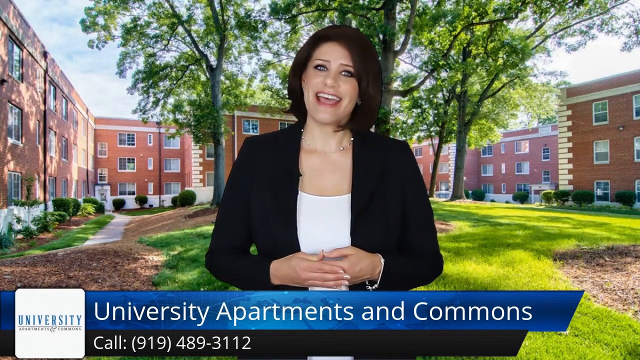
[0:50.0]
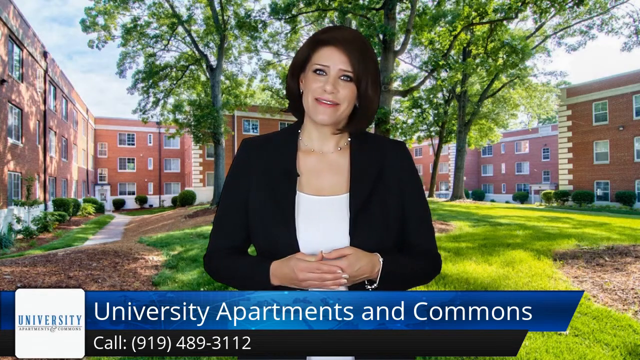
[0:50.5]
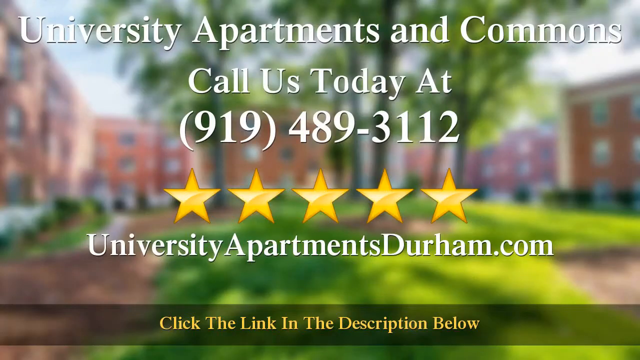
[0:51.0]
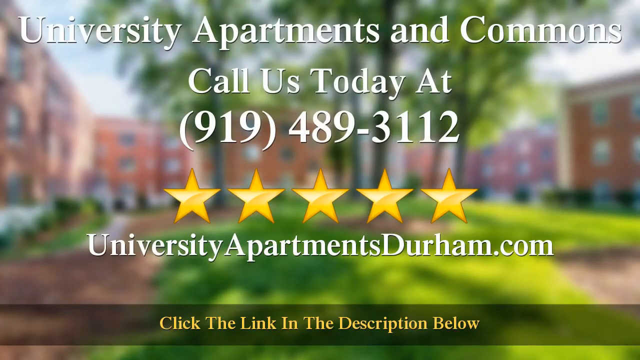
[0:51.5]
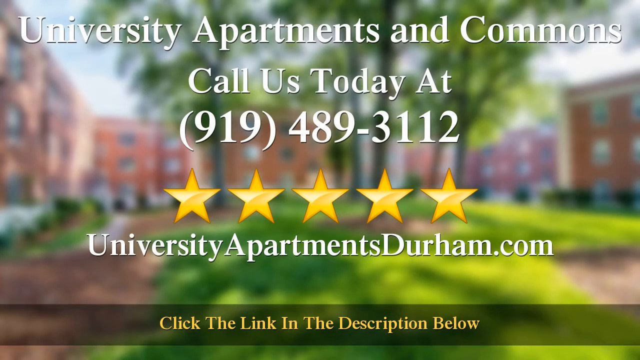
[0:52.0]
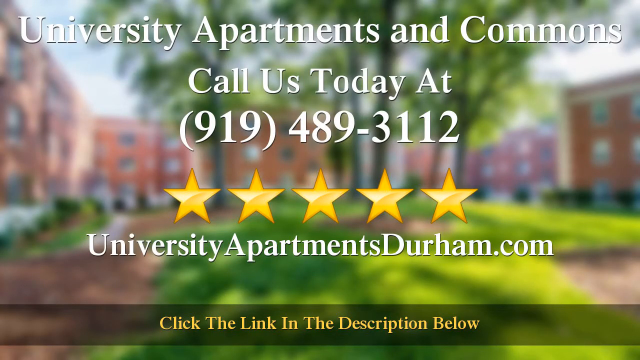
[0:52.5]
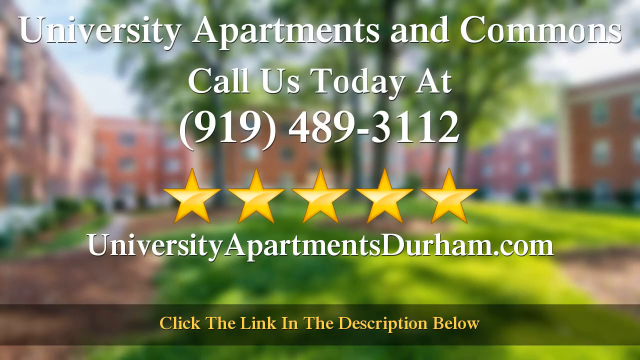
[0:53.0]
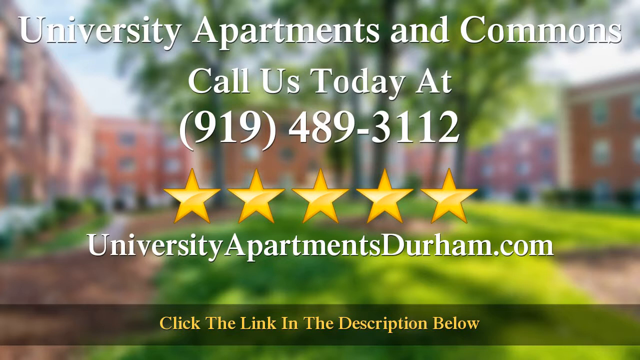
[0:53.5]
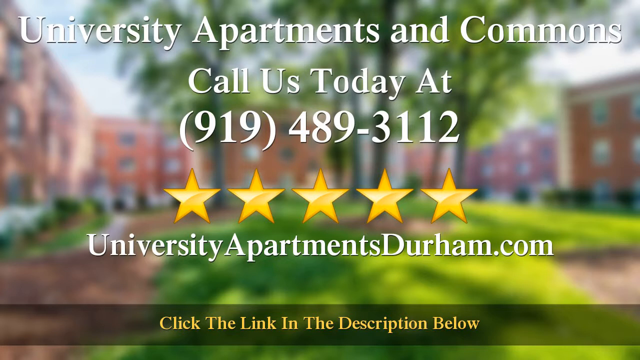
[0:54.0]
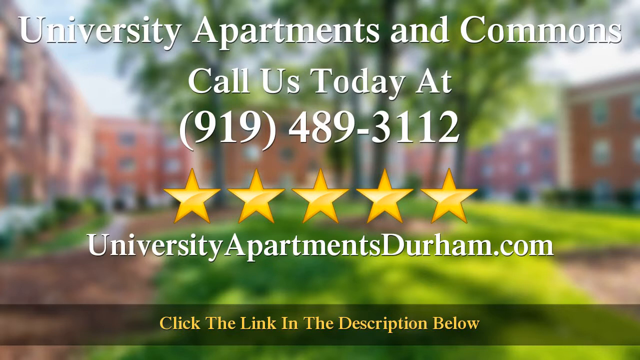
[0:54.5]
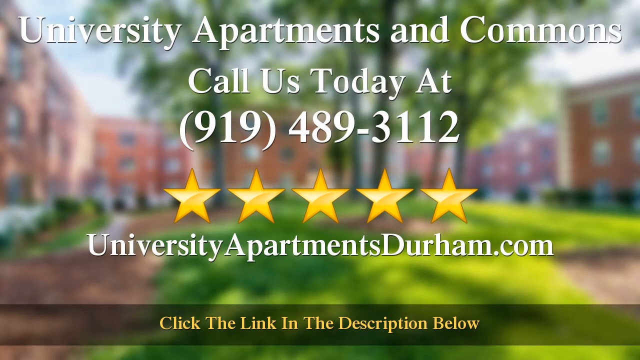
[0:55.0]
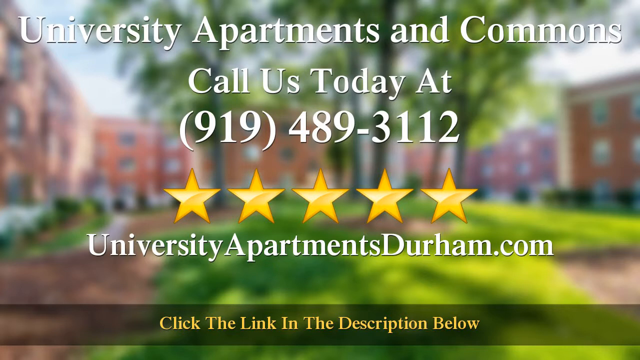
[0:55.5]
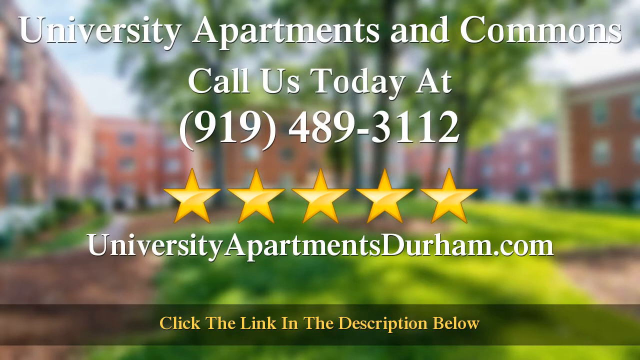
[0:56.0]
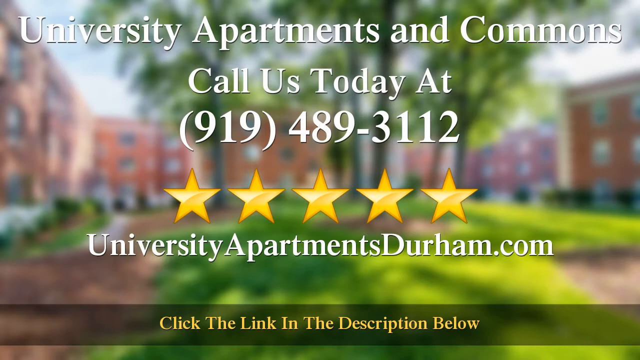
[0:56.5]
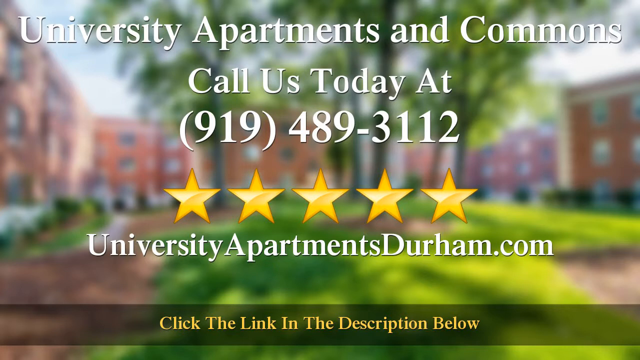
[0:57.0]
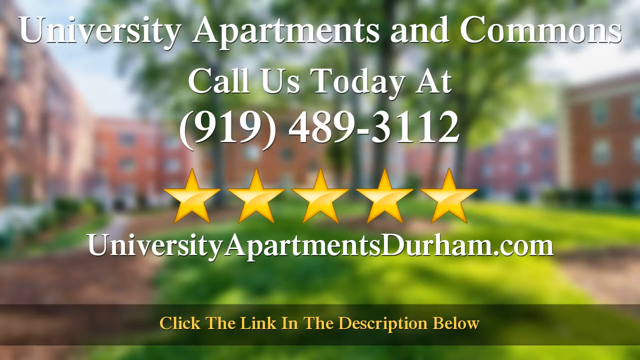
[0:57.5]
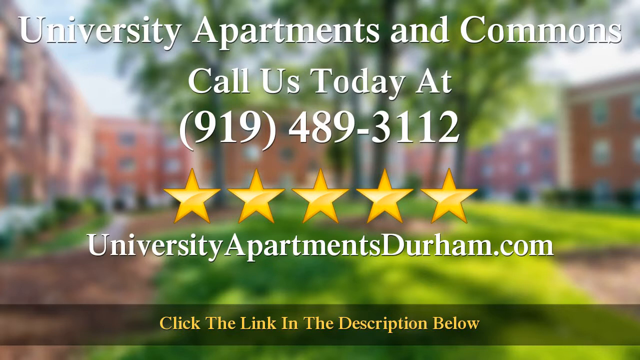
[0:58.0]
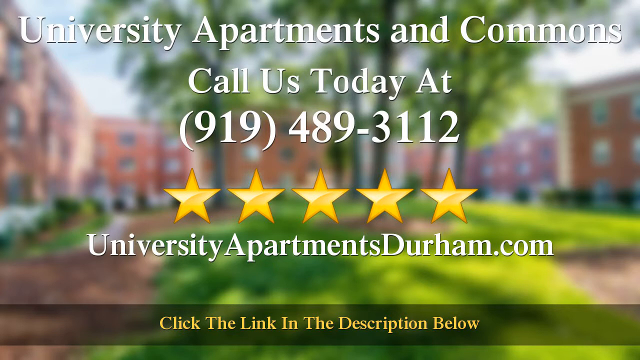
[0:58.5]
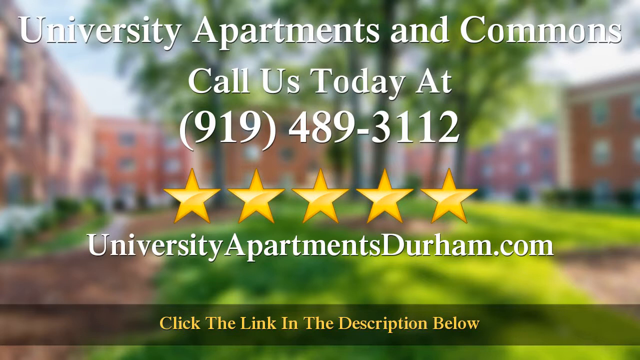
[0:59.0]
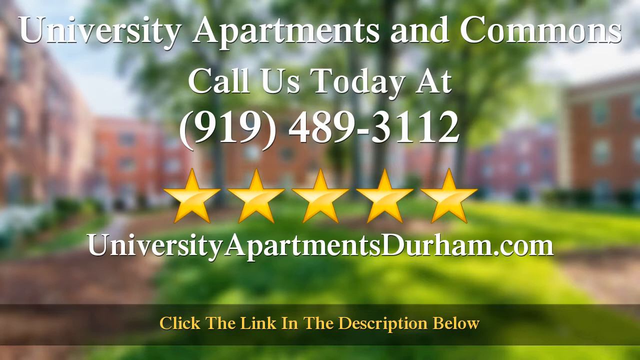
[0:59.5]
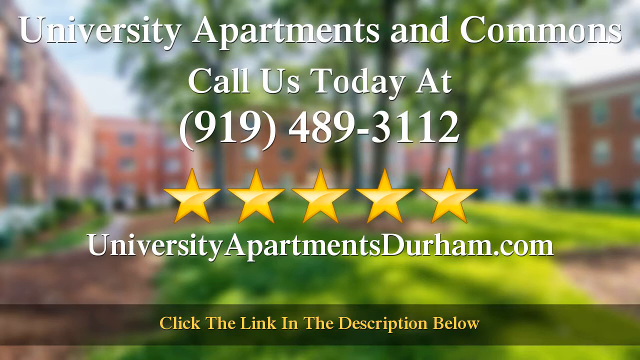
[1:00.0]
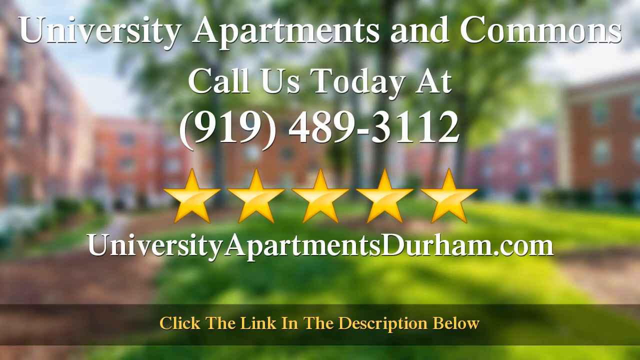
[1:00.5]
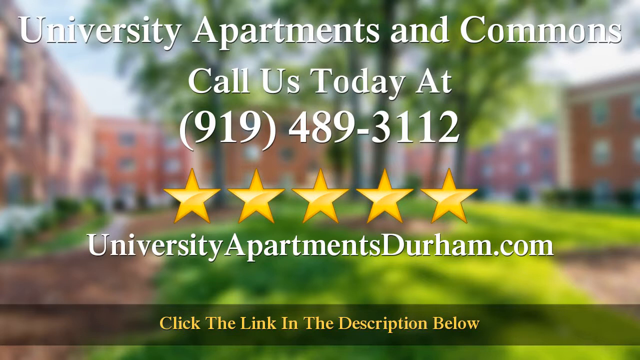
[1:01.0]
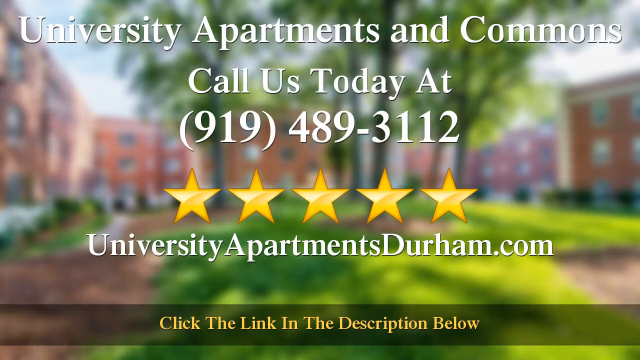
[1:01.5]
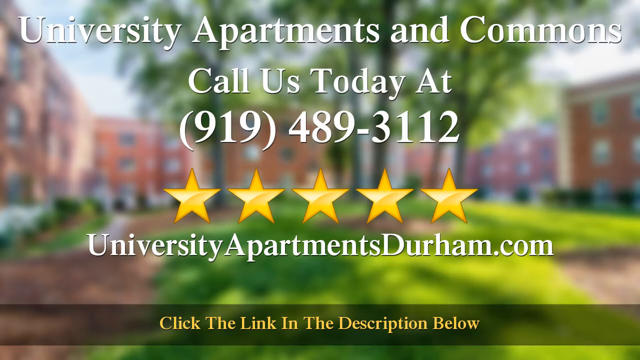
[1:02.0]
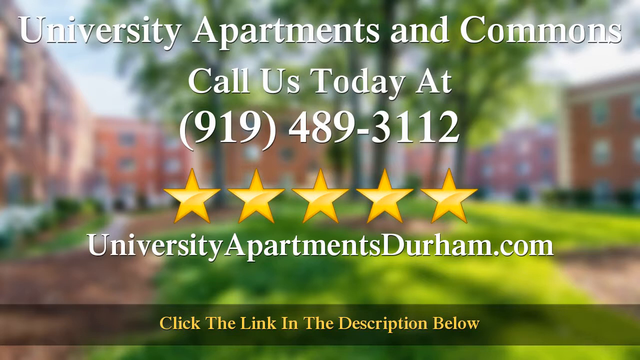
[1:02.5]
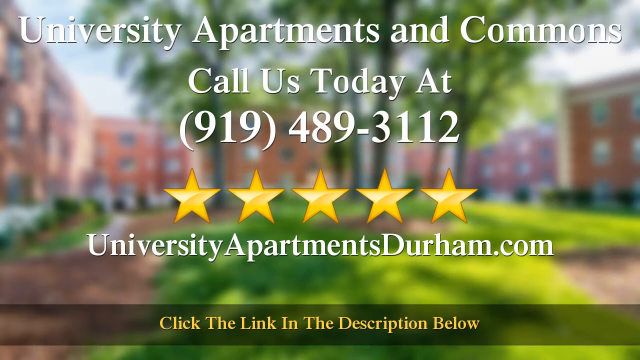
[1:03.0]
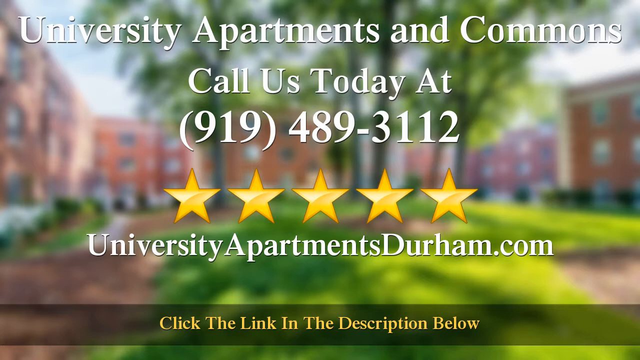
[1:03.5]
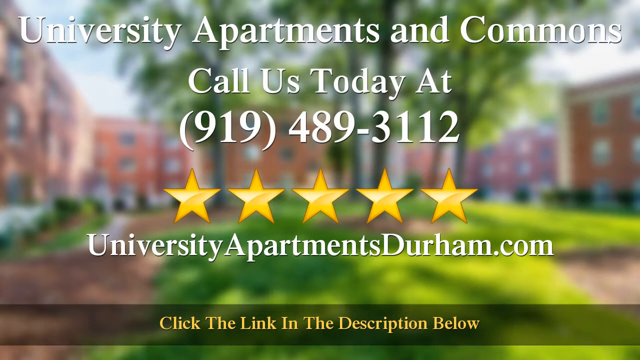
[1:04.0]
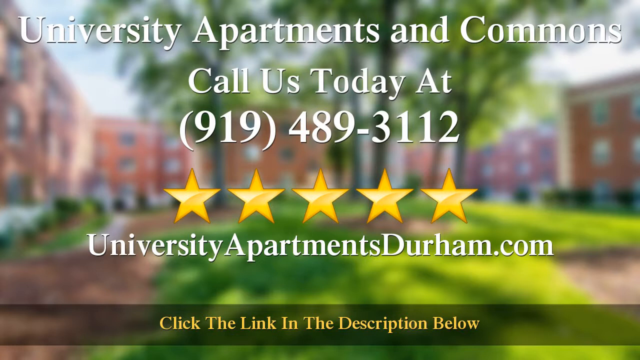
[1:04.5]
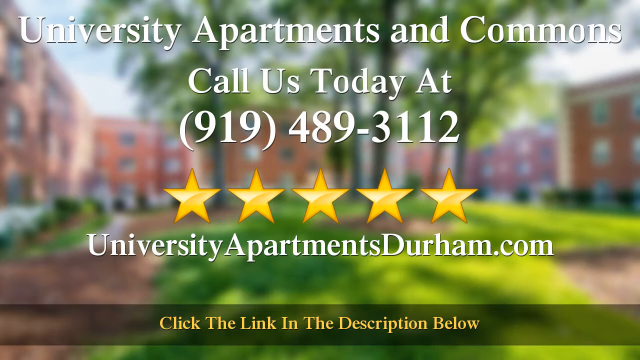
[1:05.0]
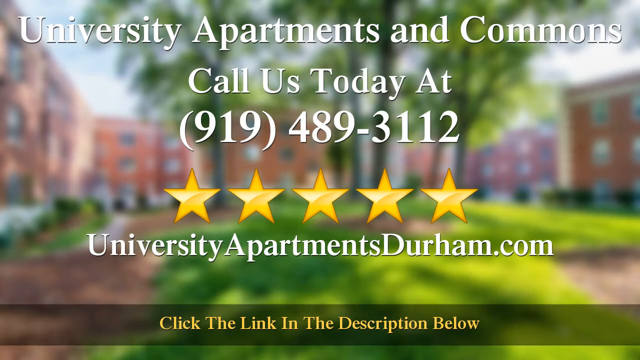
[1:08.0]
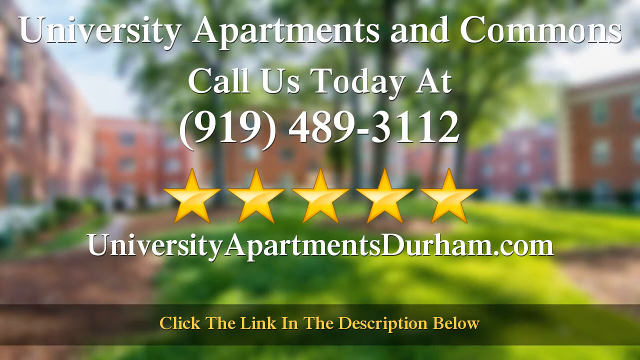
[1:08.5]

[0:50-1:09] The five stars and the University Apartments and Commons name appear, followed by the lady with brown hair, wearing a black jacket and a white t-shirt, with some apartments and some trees behind her and a number to call underneath. A five-star review by John follows, saying he and his wife lived in the university apartments, had great neighbours and facilities, found the pool and gym really nice, had few maintenance issues that were taken care of quickly, found the entire staff nice and helpful, and got a lot for their money. The video then returns to the lady speaking into the camera, most likely encouraging people to stay at the apartments. At the end, there are 5 stars, a number to call, and a link in the description below.